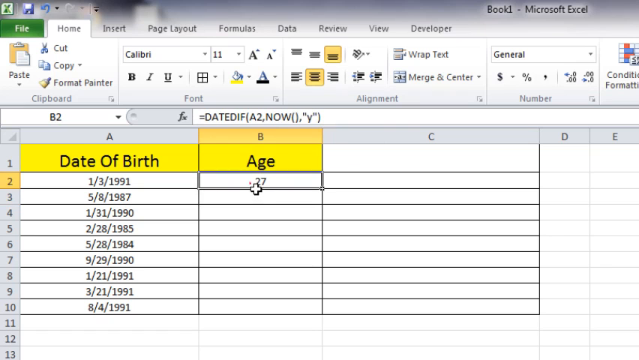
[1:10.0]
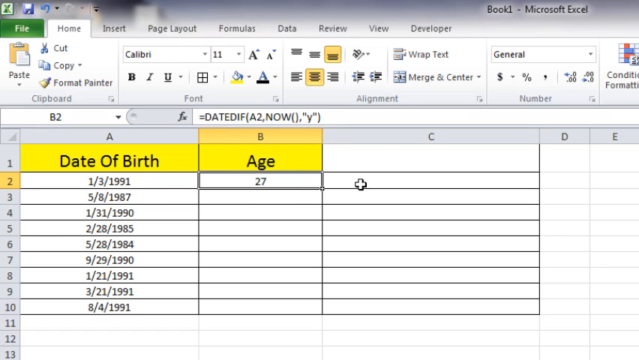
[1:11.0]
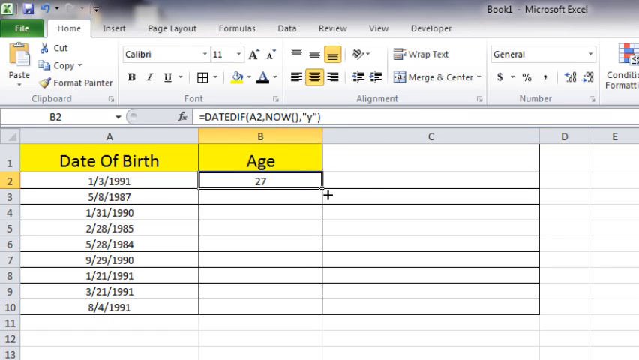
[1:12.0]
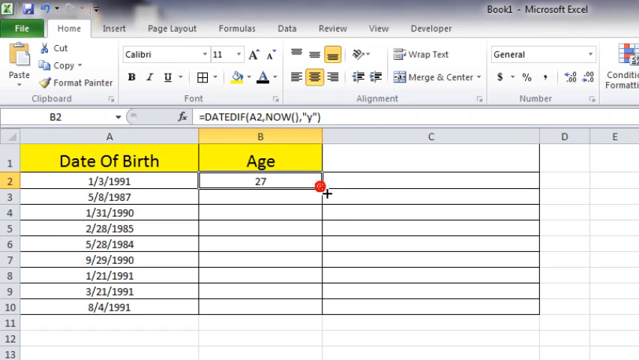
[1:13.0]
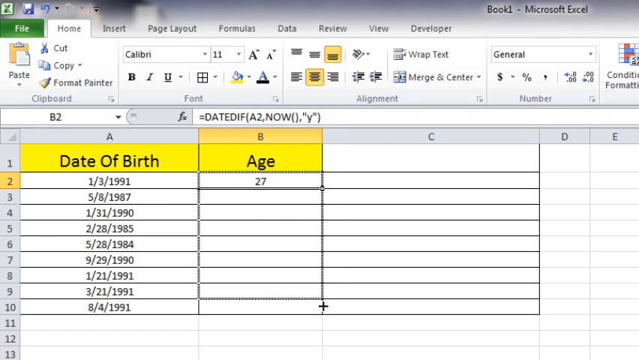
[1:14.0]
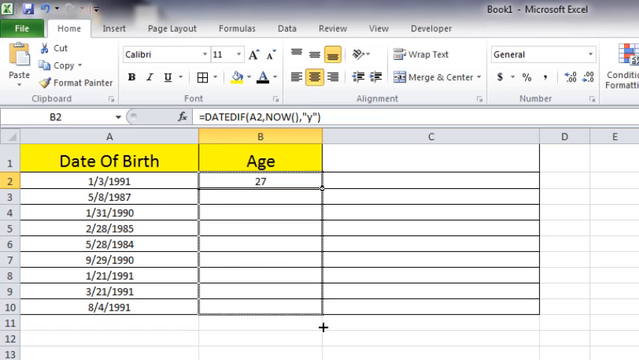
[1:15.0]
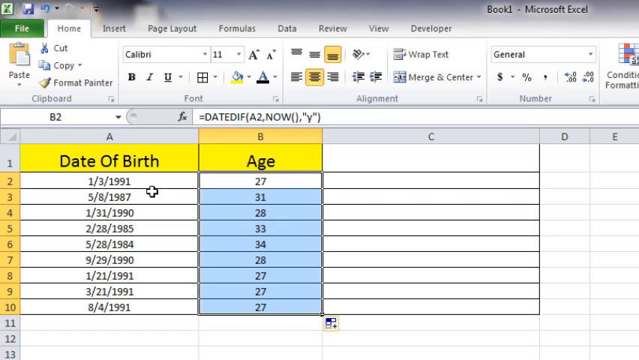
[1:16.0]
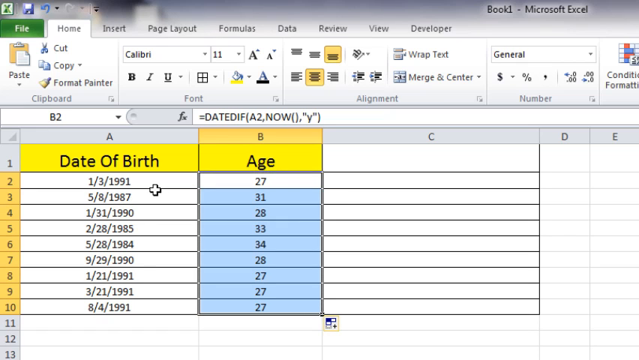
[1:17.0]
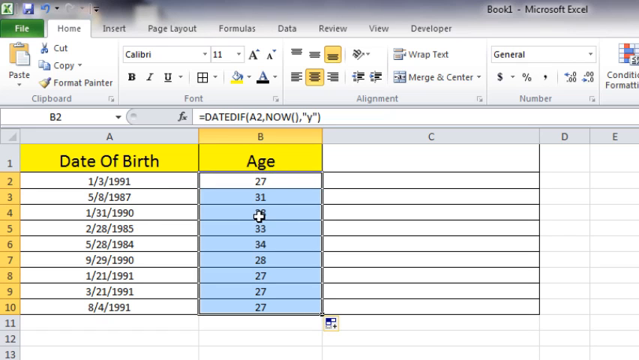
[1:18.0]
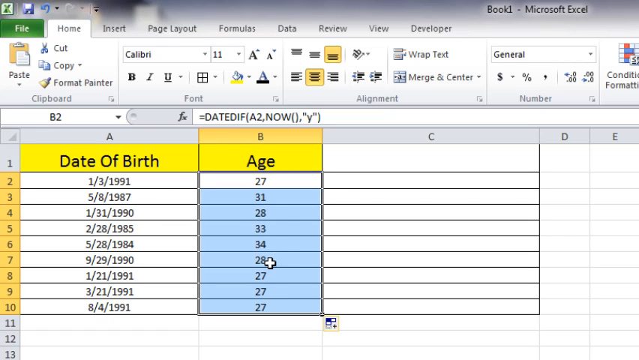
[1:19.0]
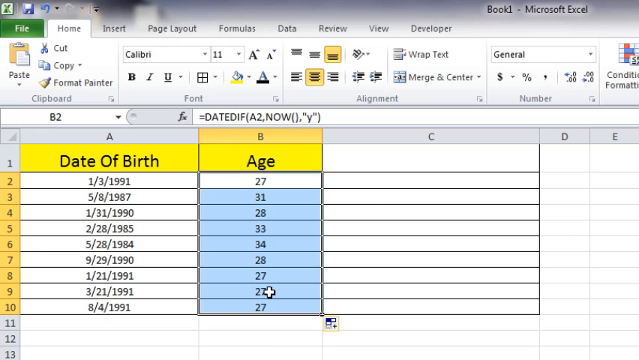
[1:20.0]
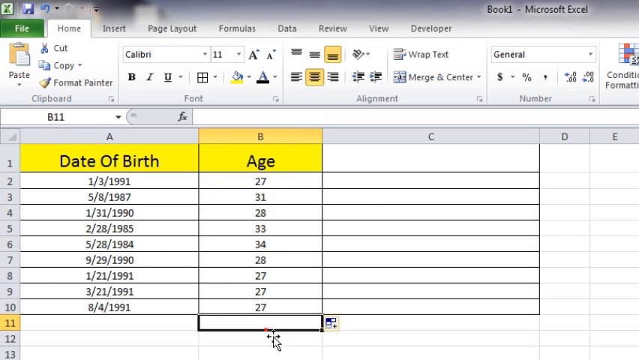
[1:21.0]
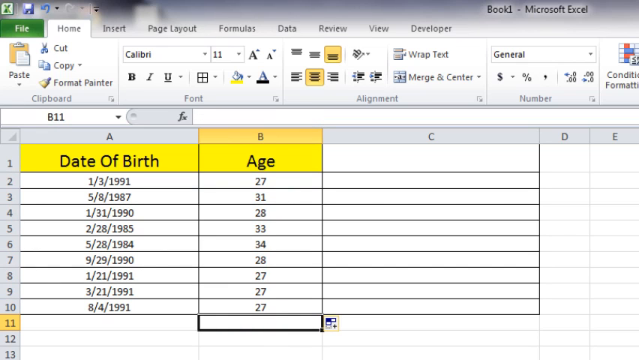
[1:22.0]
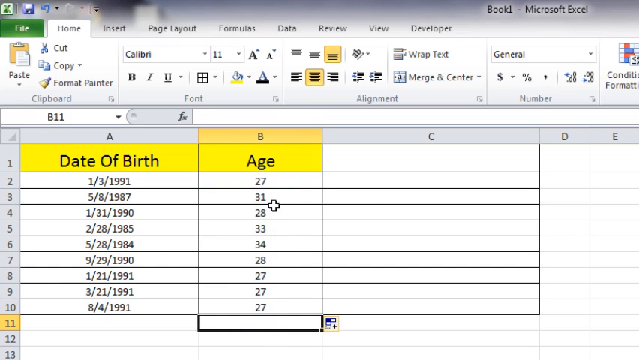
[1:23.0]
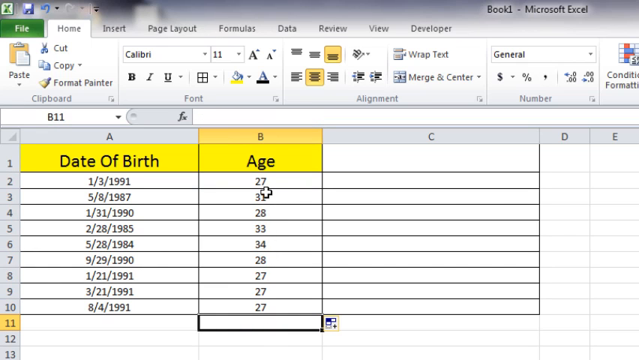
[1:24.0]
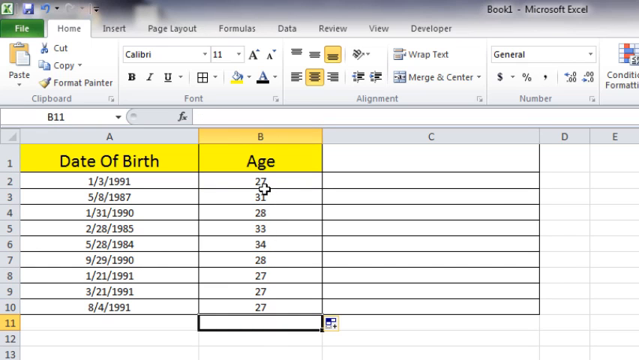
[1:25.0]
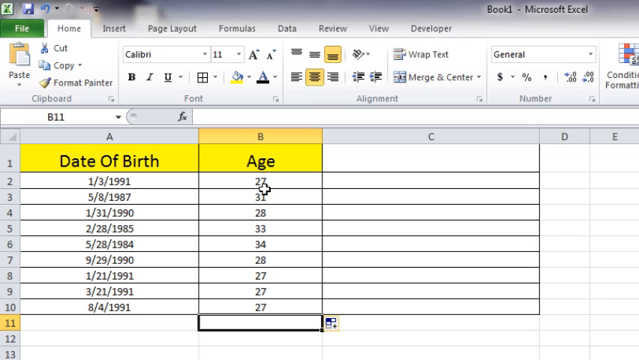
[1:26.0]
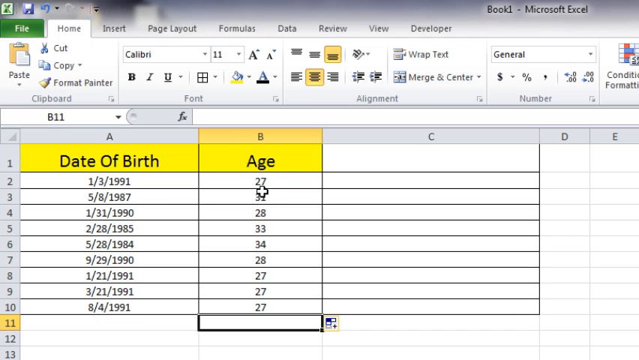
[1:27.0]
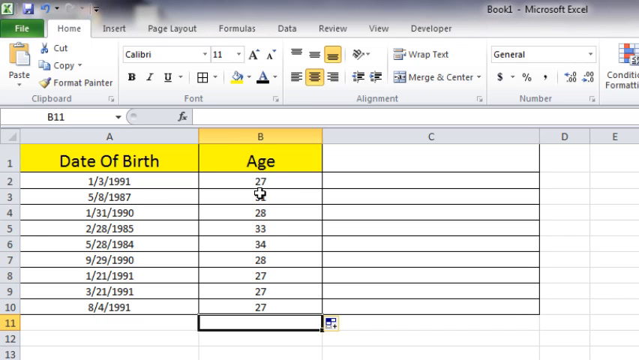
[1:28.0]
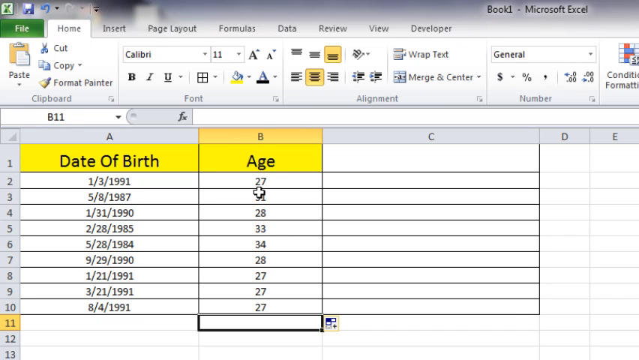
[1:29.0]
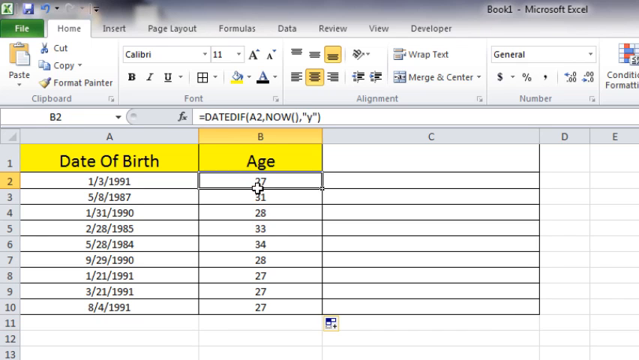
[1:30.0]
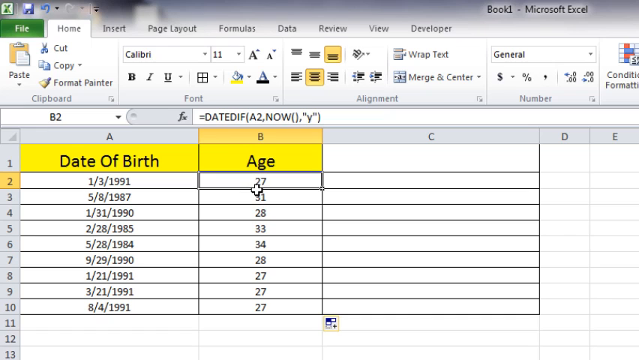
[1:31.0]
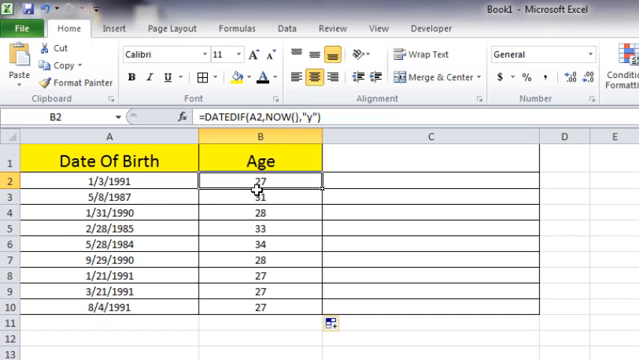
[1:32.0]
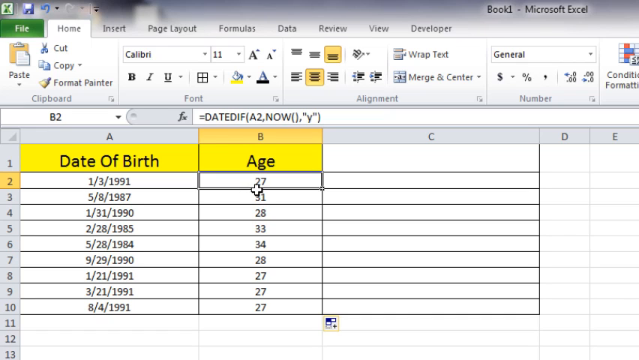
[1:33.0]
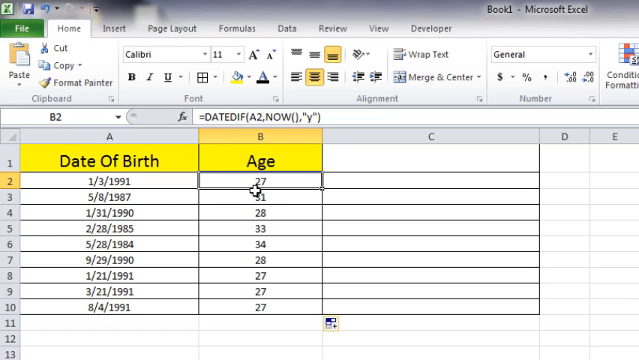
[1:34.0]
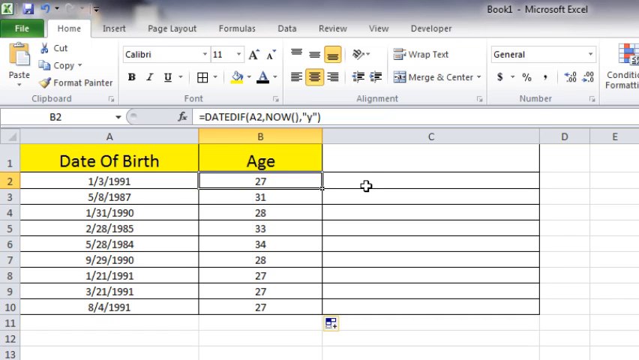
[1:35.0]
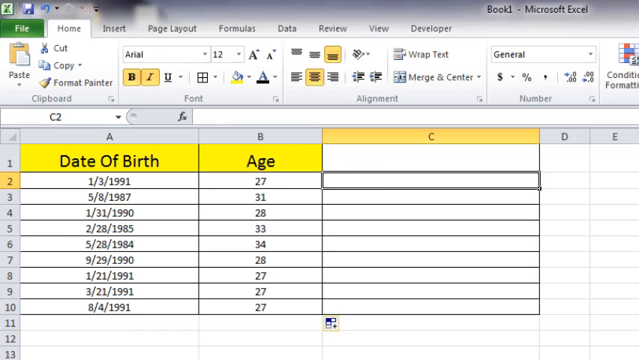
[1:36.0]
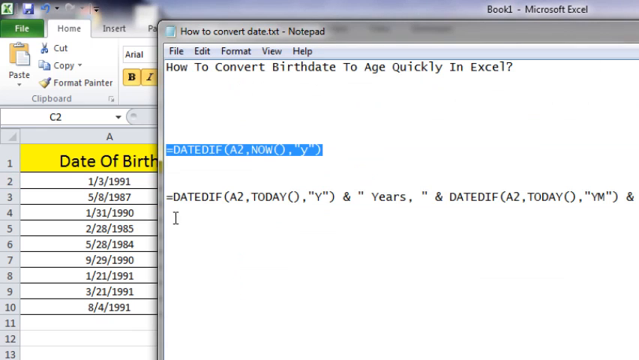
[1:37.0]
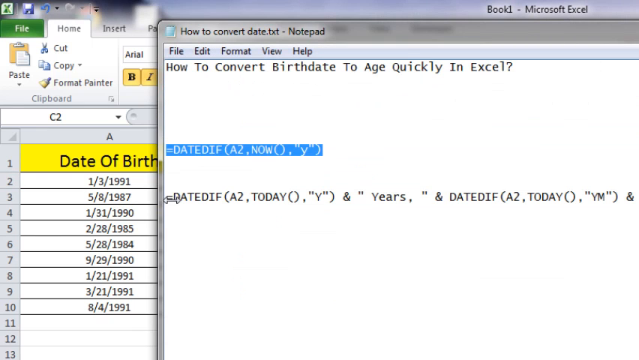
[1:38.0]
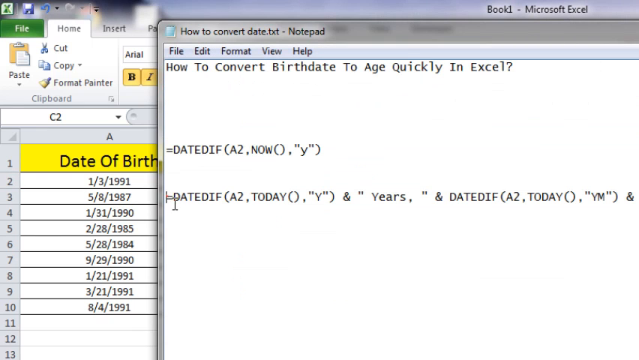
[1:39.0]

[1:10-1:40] The cursor is dragged down to fill the formula into the rest of the rows, and they auto-populate with ages such as 31, 28 and 33, mostly late 20s and early 30s. The cursor moves around, then clicks into C2. The view goes back to the notepad, where a second formula with more parameters appears below the first one, beginning with DATEDIF, A2, today, y. It apparently strings together years, months and days as text, so that the age reads something like 27 years, 6 months and 2 days instead of just 27.